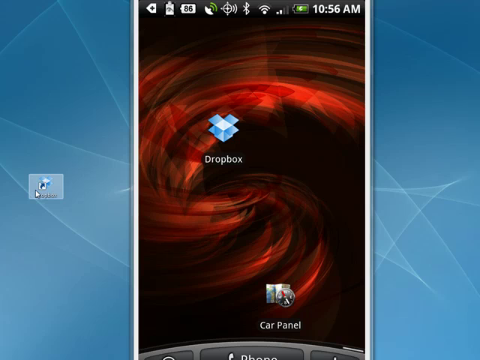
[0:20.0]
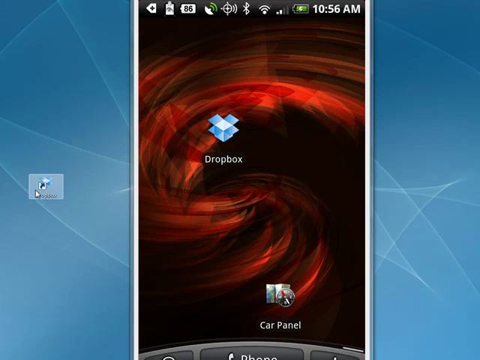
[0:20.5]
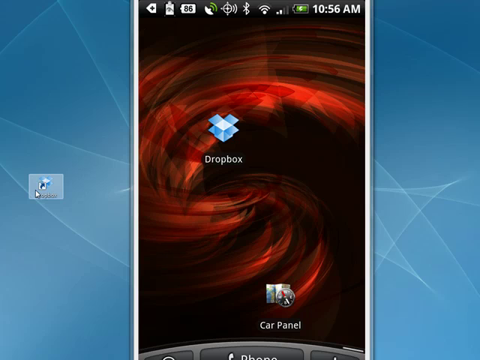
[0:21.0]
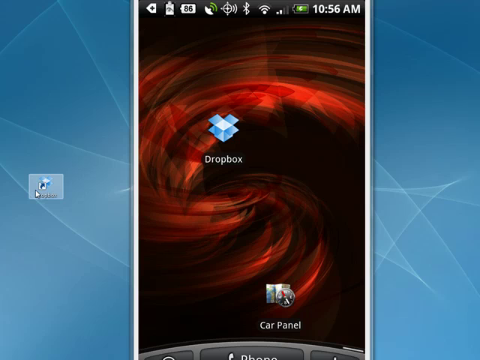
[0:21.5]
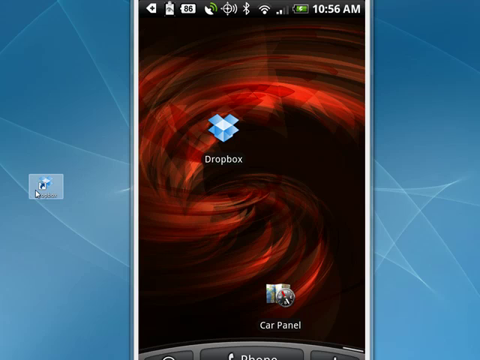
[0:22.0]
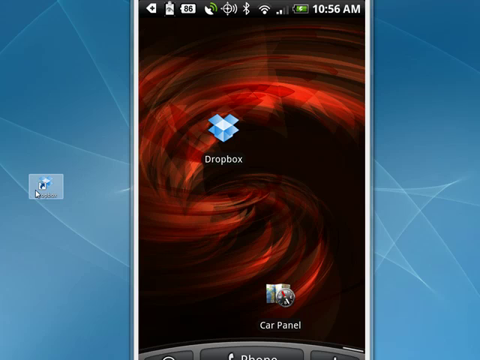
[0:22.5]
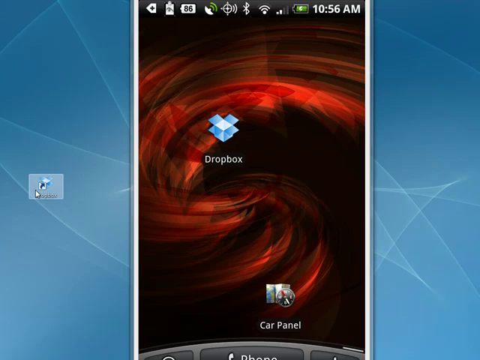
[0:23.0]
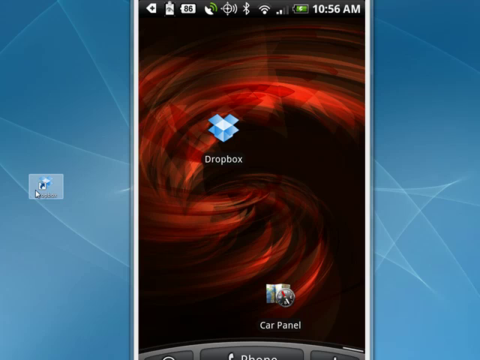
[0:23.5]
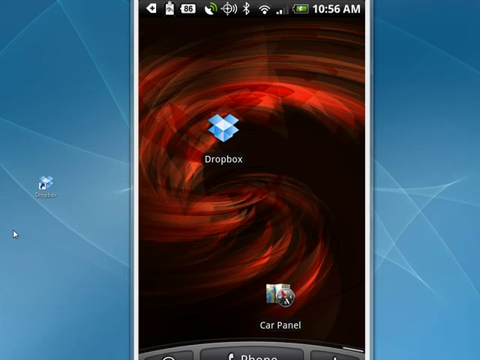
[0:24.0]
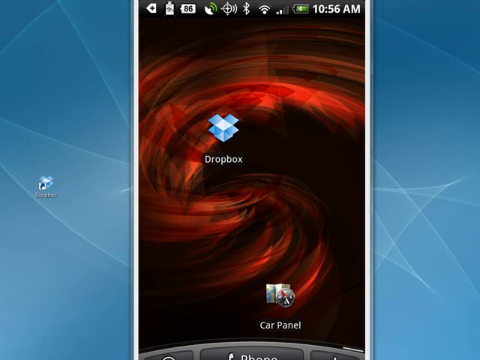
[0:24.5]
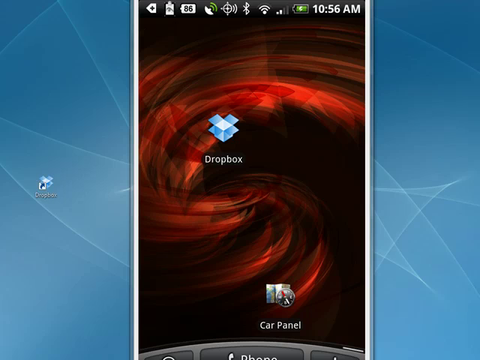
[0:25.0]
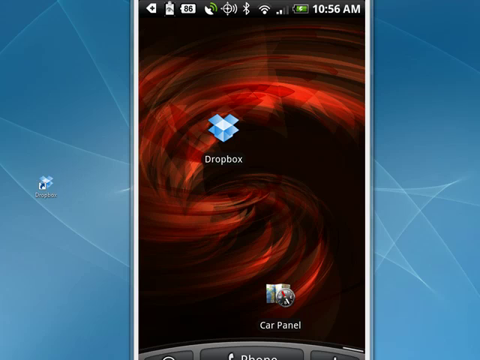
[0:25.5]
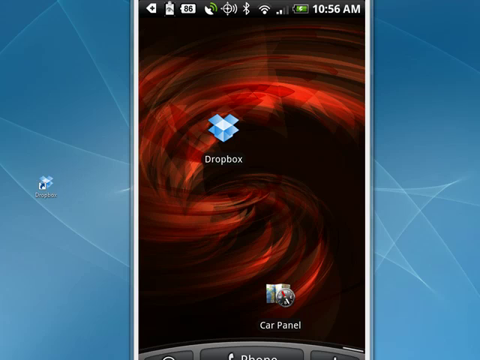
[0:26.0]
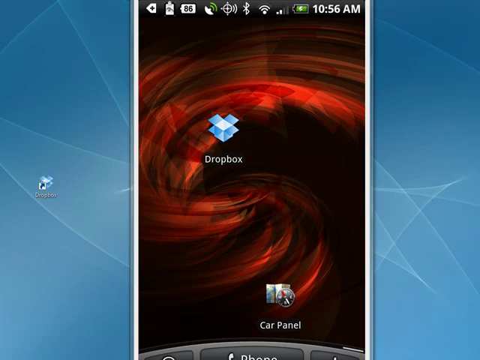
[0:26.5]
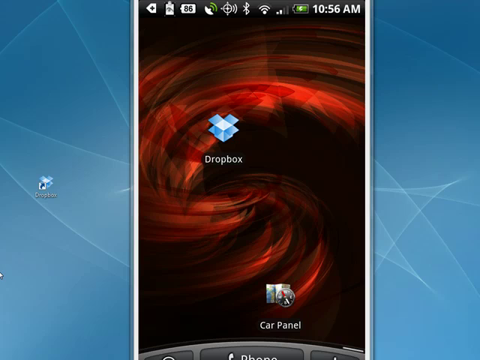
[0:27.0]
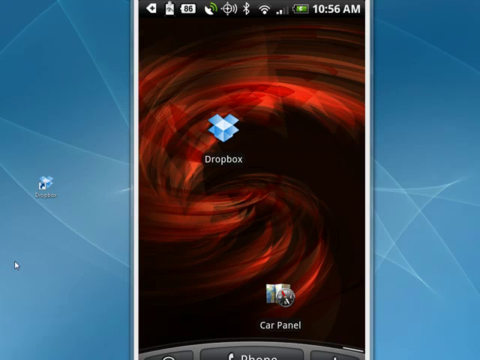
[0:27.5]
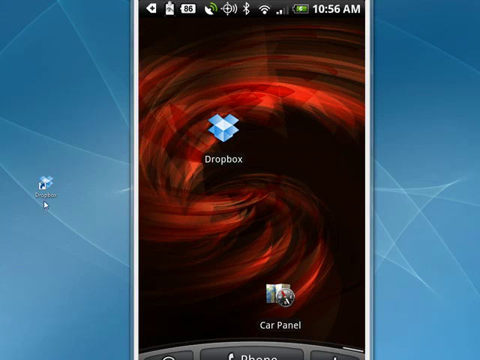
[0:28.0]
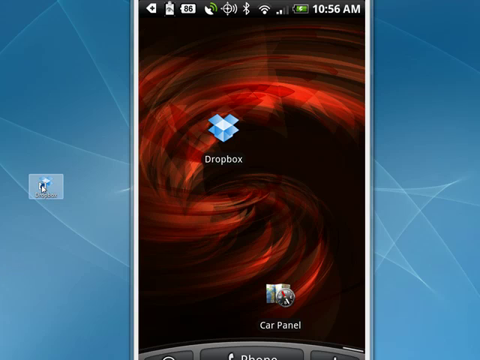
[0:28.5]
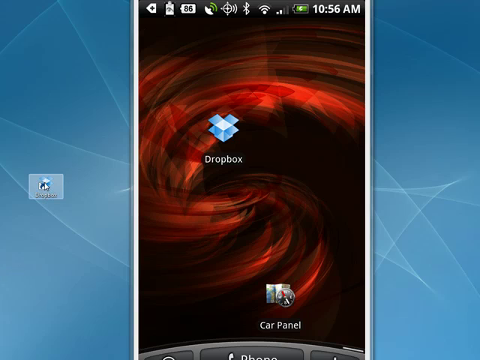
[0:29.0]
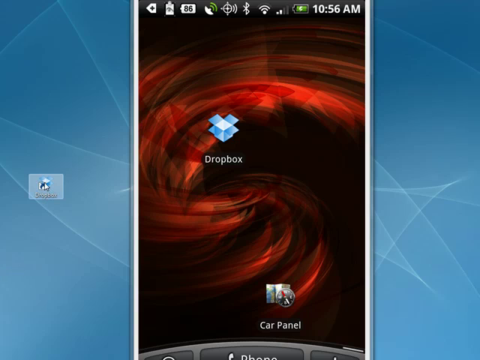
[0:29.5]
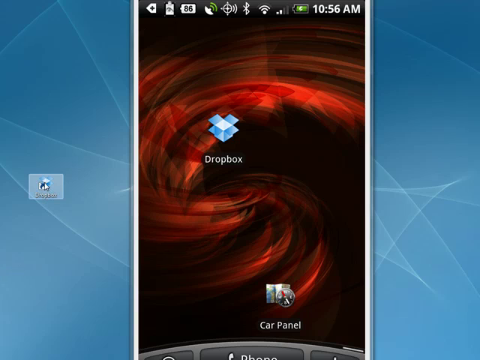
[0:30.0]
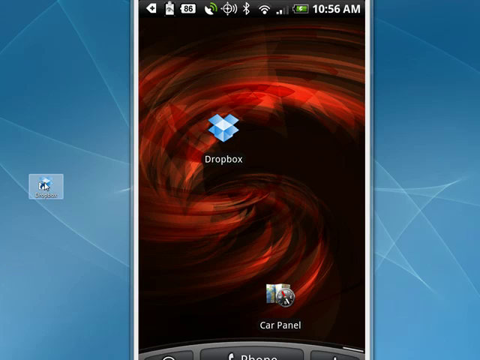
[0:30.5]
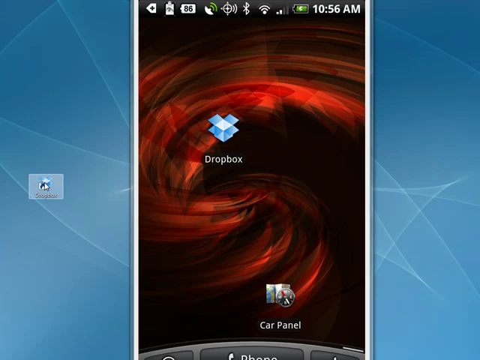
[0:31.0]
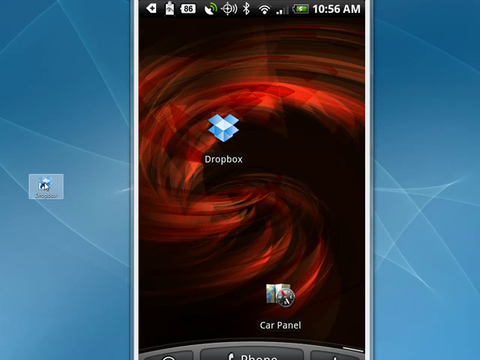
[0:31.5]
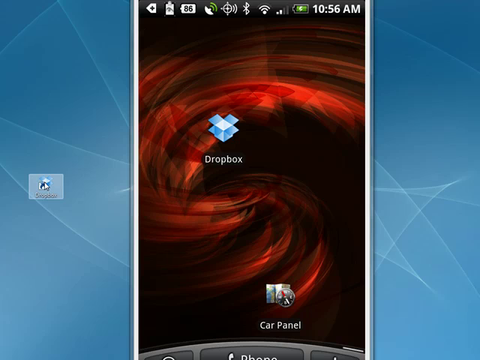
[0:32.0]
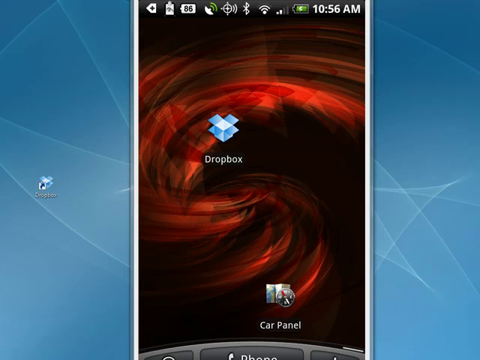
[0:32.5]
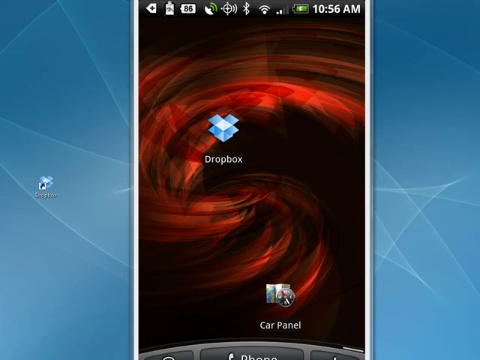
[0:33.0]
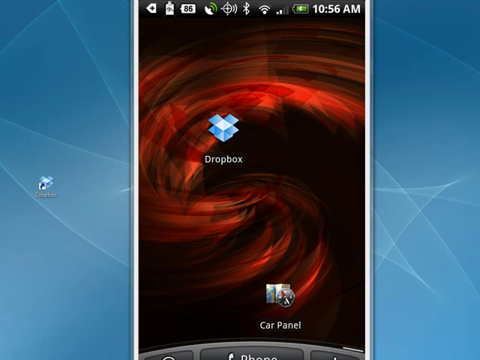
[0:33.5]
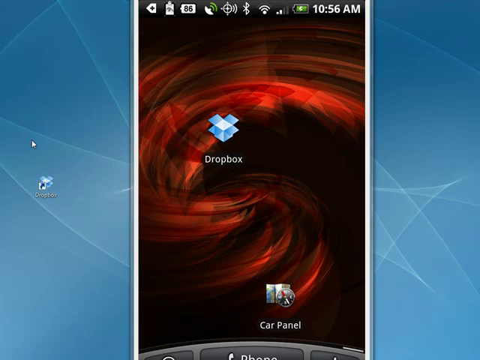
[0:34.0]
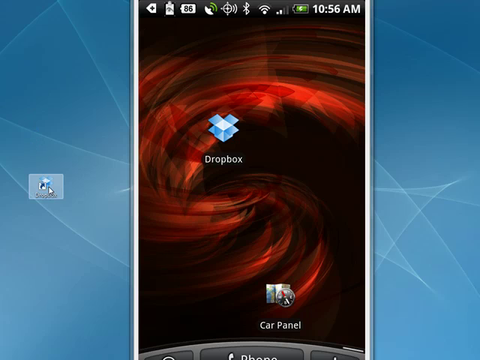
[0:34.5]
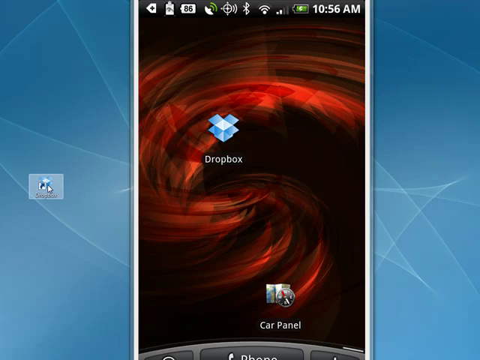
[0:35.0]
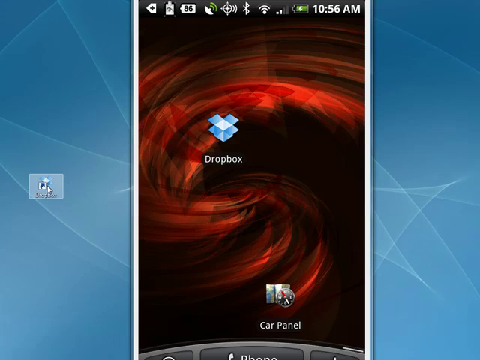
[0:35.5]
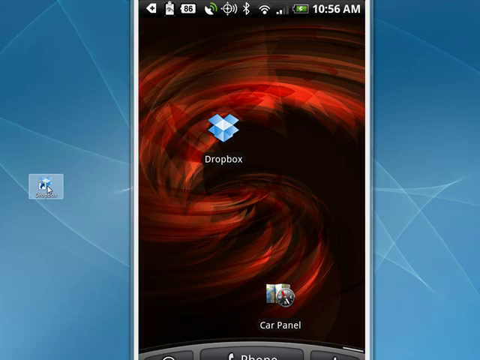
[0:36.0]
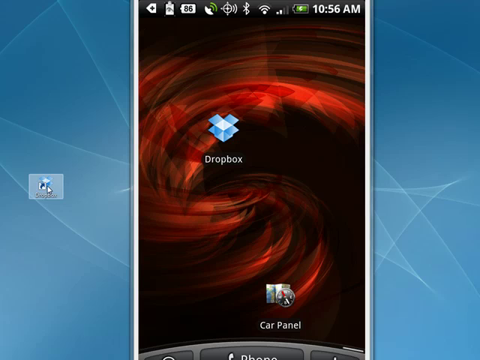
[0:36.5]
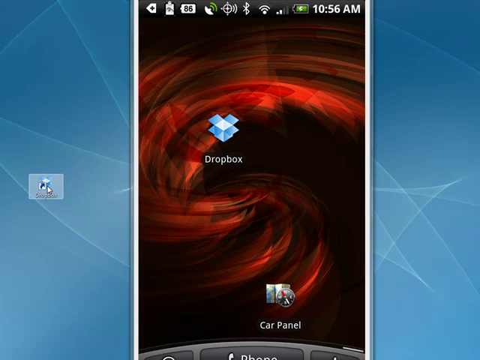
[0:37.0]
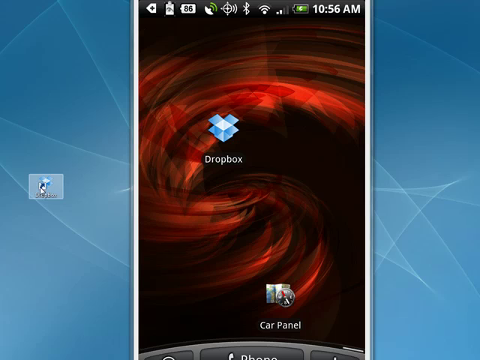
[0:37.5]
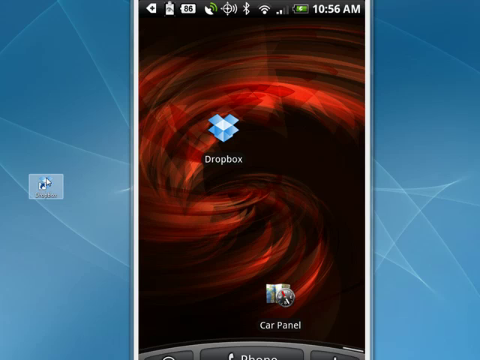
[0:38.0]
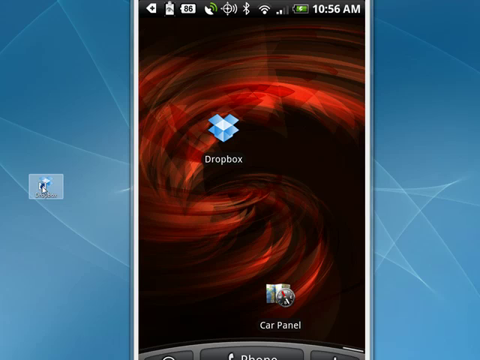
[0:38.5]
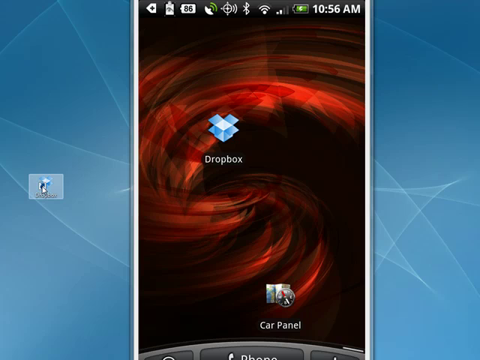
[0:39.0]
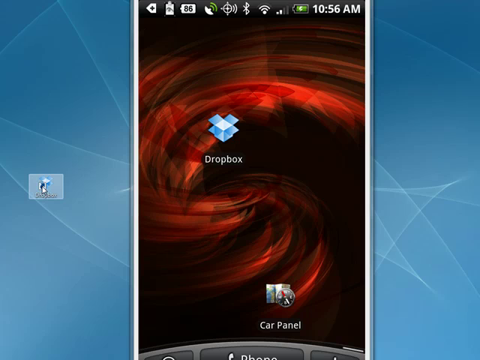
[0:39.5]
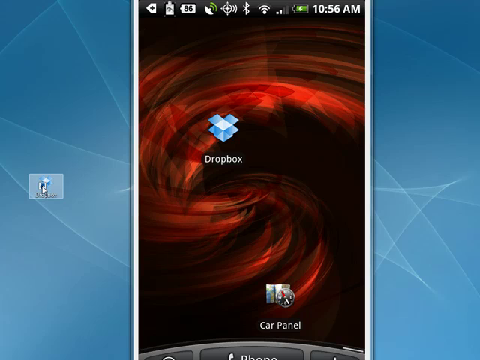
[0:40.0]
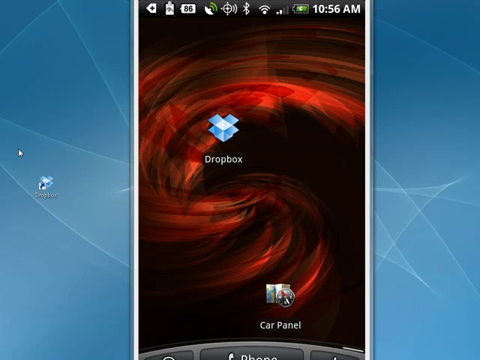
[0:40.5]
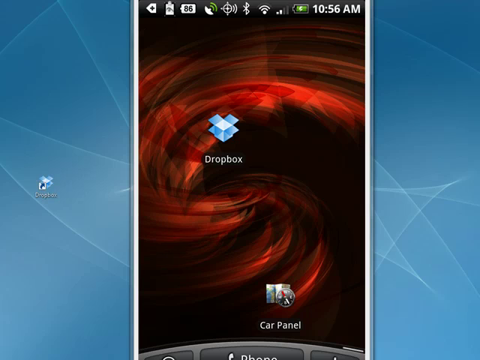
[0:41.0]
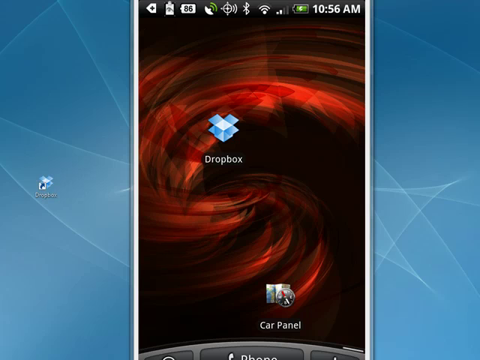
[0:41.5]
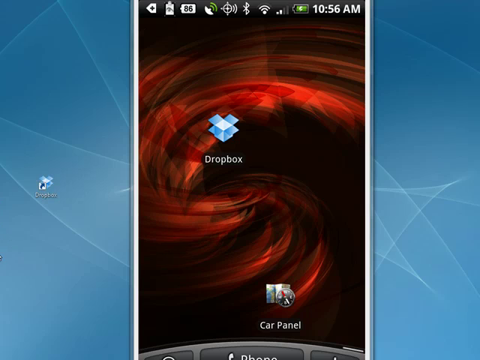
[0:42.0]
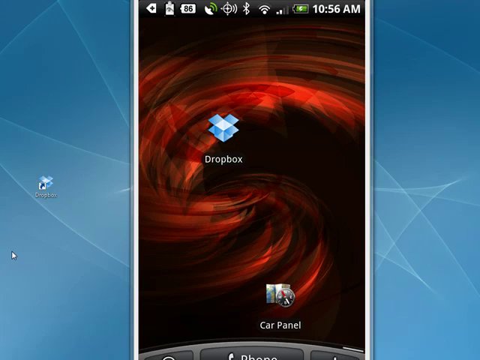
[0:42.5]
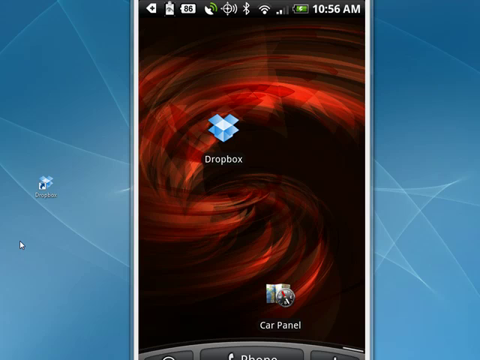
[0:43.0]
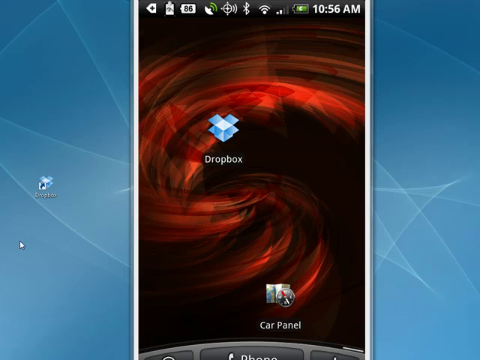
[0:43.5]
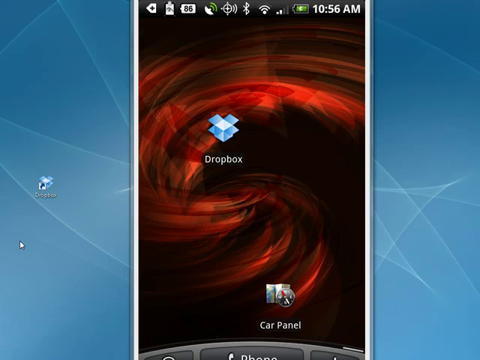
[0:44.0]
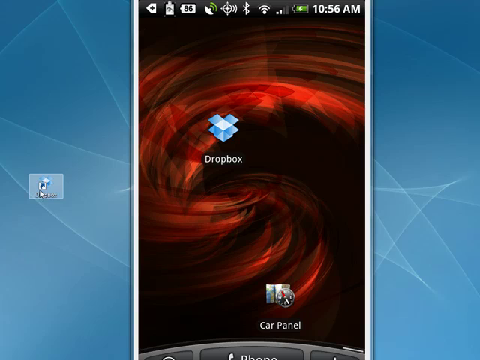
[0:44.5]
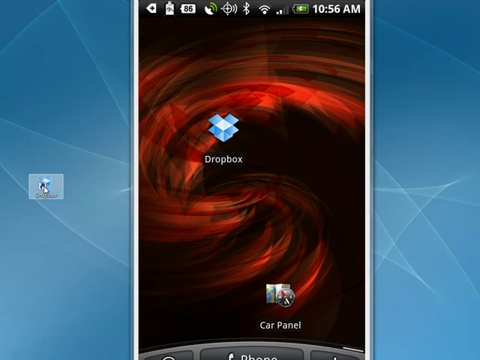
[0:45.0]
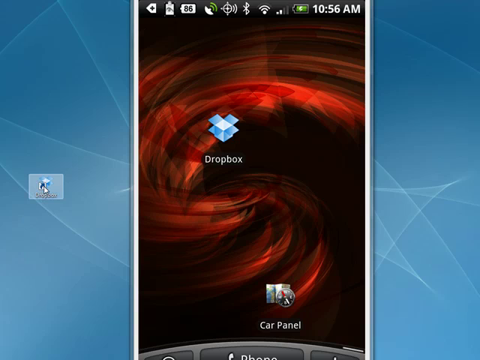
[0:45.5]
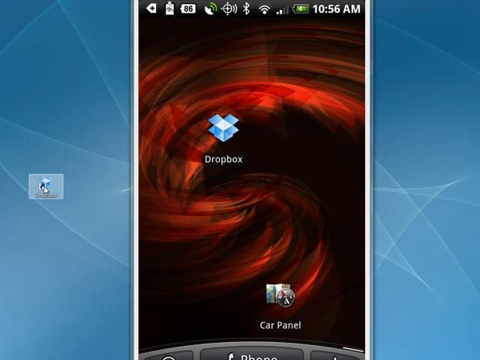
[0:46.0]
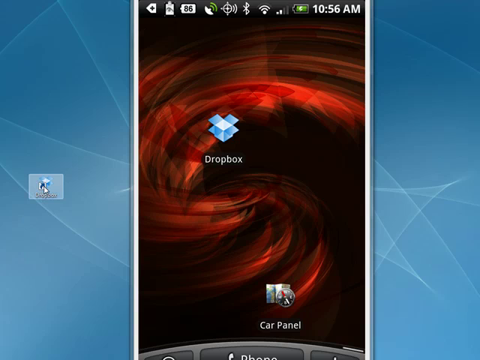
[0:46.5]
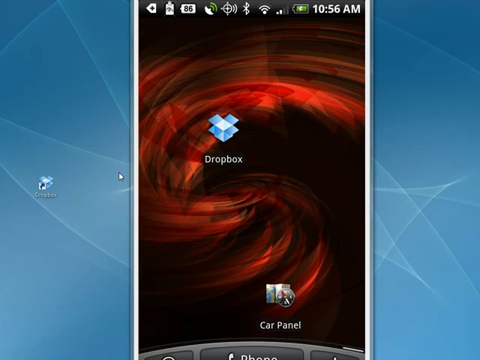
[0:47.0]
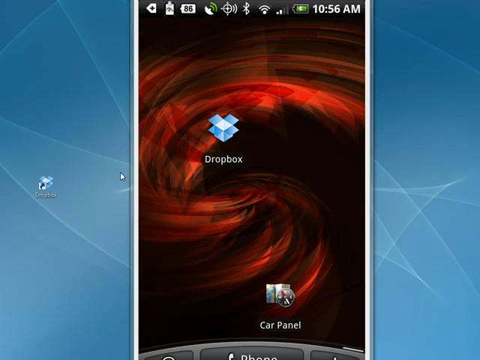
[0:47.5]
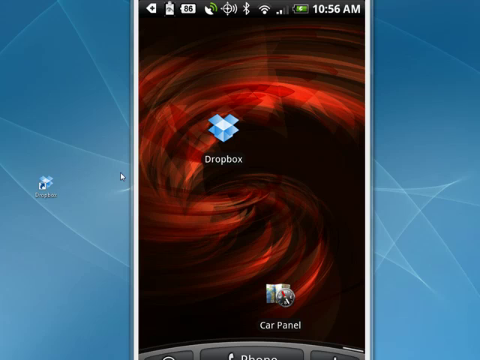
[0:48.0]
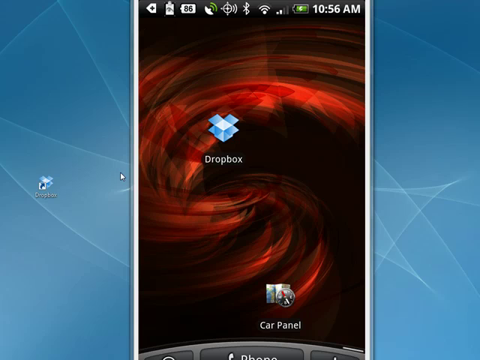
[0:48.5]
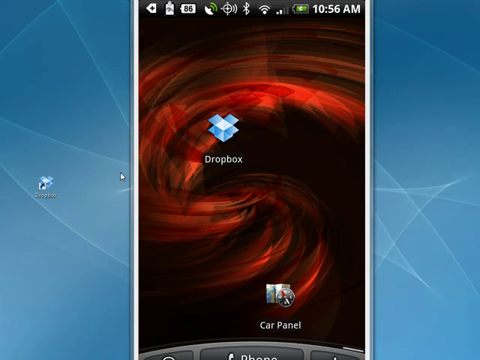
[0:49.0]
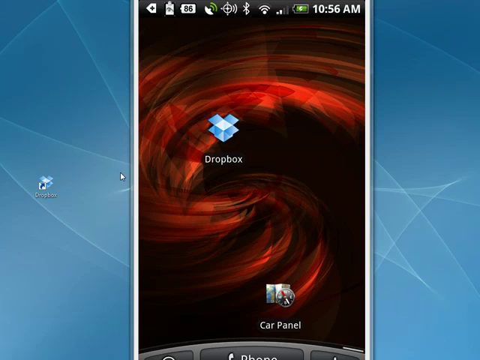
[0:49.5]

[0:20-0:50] The top of the phone shows status indicators: wi-fi is on, bluetooth is on, the battery is at 86 percent, and the time is 10:56 a.m. It almost looks like the phone is also on a computer screen, since a blue background is visible along with another link for Dropbox. A mouse pointer appears on the computer-screen part and hovers over Dropbox, highlighting it without clicking. It keeps moving back and forth over Dropbox, highlighting it, then goes off the screen or somewhere else, and returns to Dropbox. The Dropbox icon looks different on the phone screen and on the computer screen.